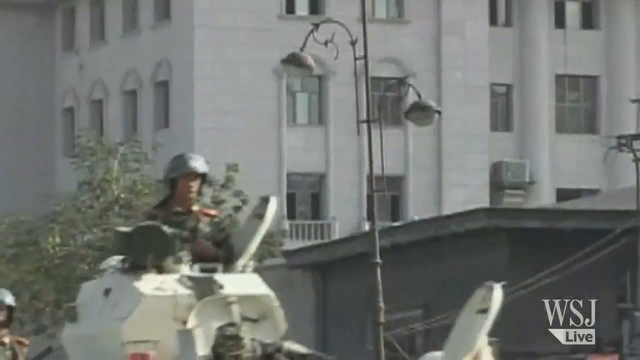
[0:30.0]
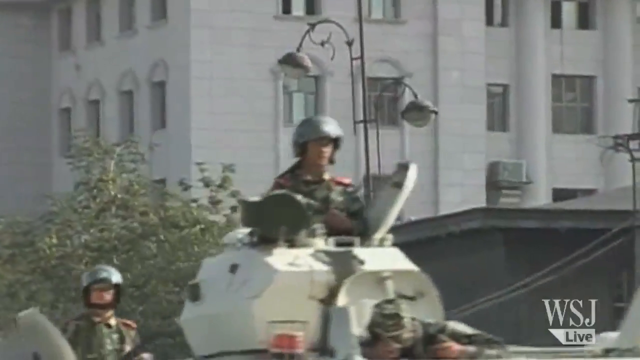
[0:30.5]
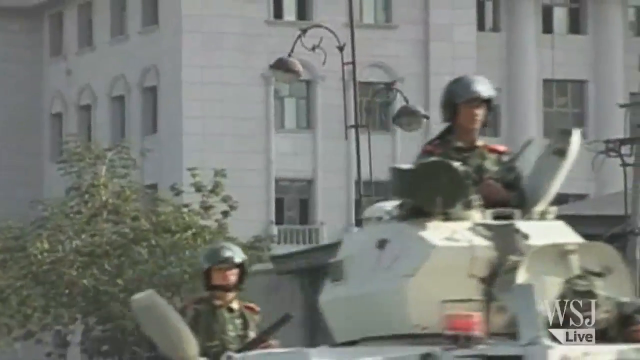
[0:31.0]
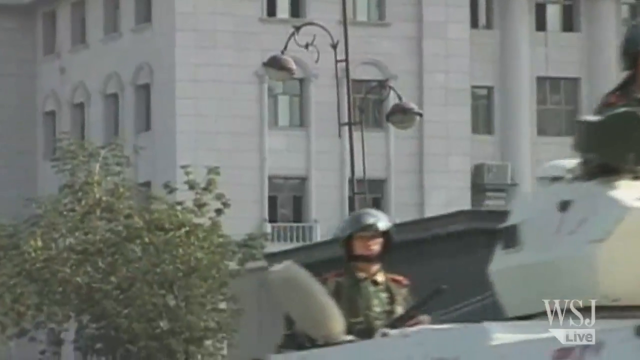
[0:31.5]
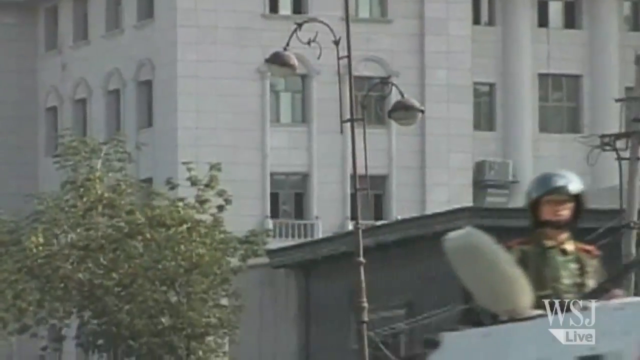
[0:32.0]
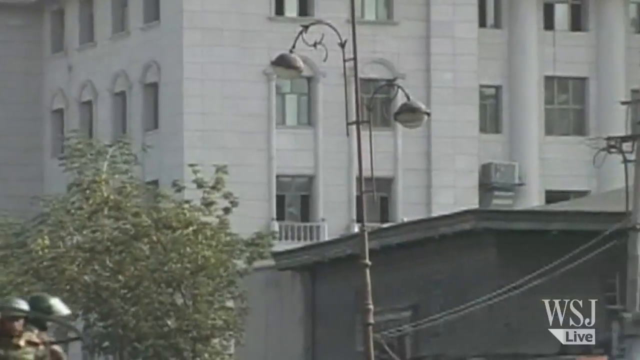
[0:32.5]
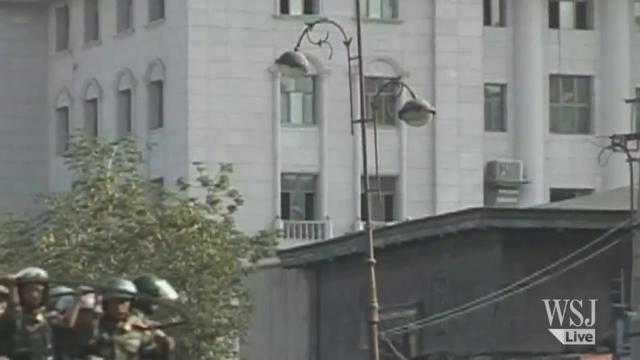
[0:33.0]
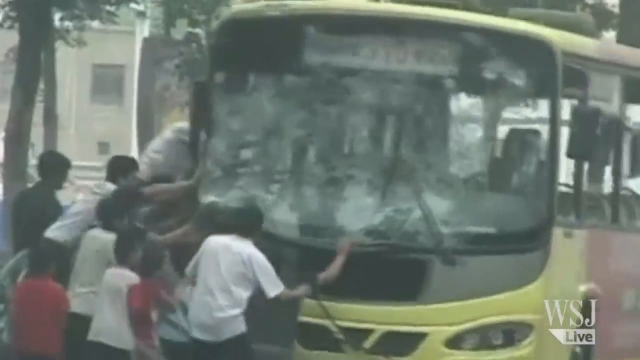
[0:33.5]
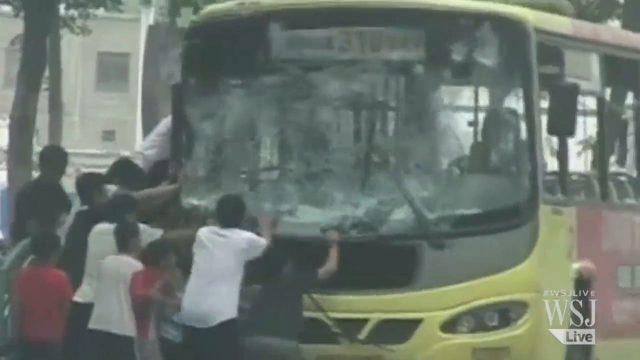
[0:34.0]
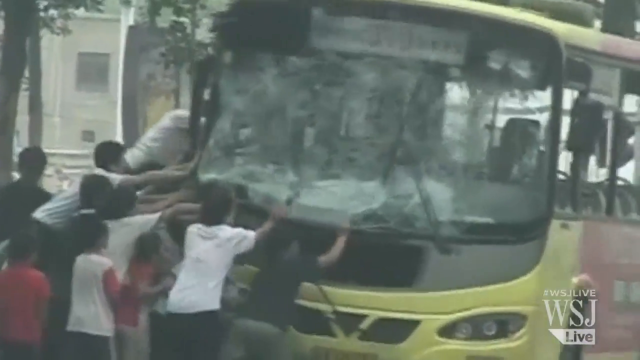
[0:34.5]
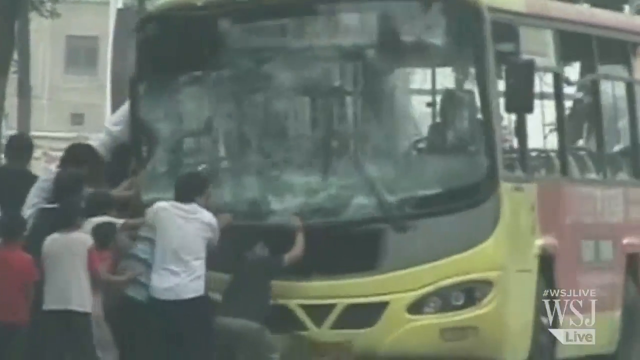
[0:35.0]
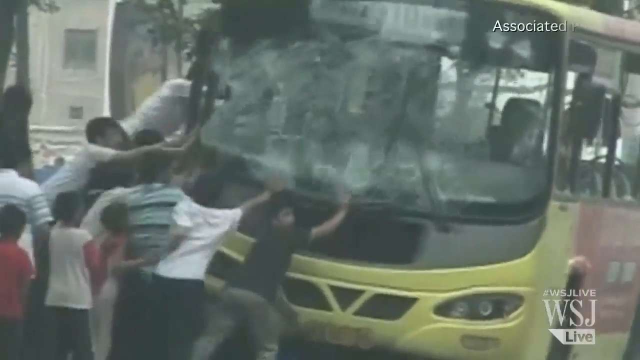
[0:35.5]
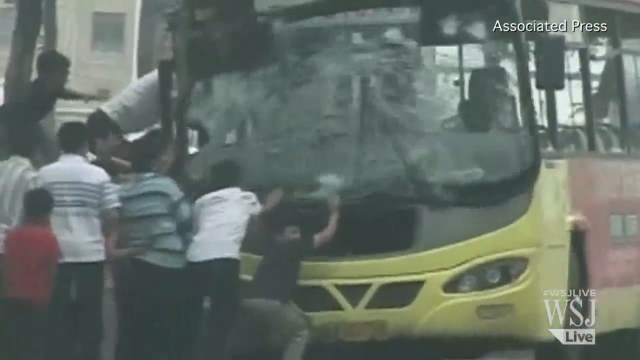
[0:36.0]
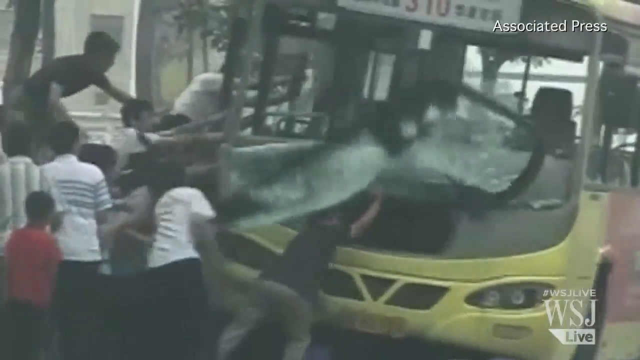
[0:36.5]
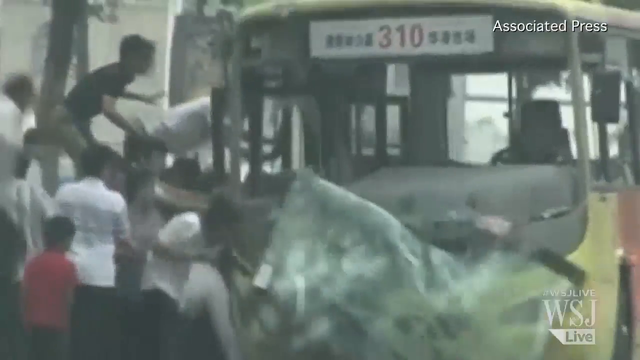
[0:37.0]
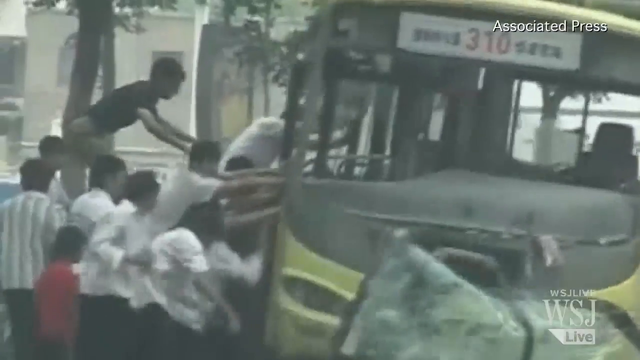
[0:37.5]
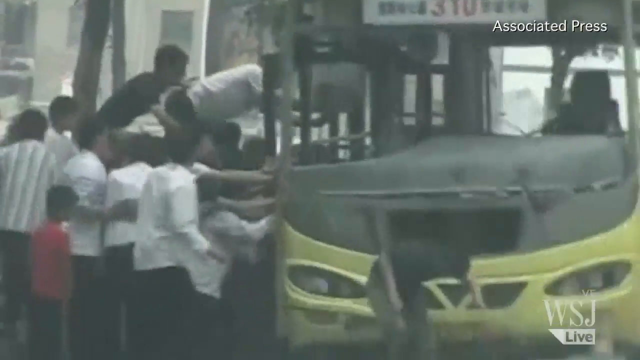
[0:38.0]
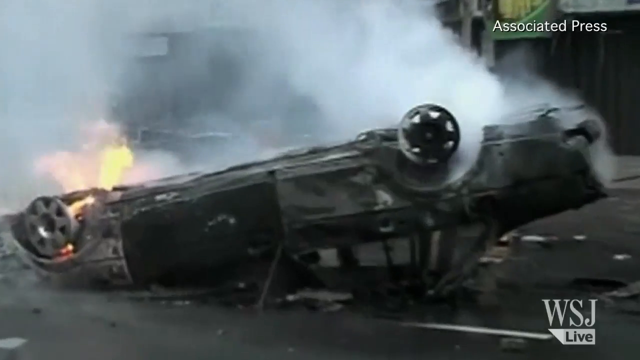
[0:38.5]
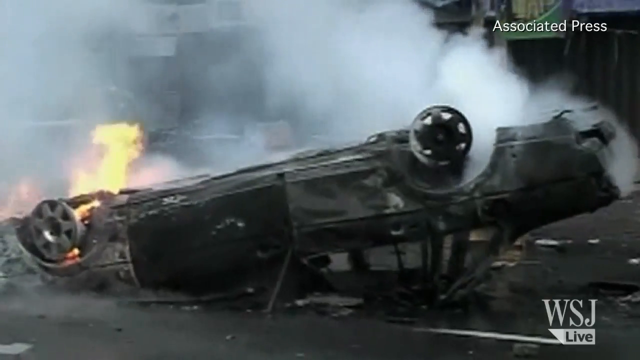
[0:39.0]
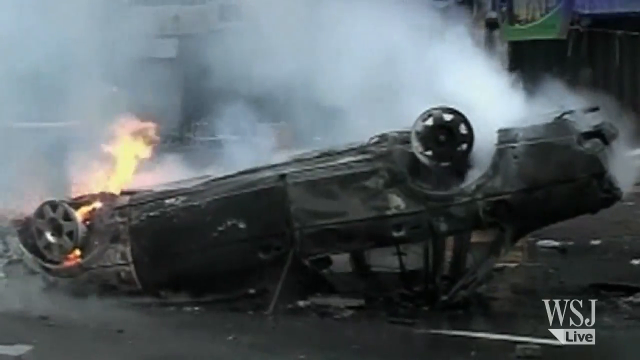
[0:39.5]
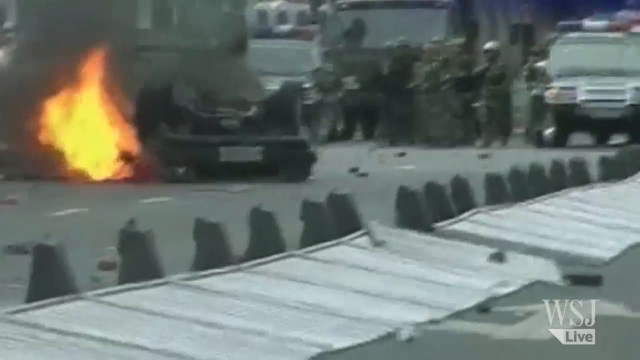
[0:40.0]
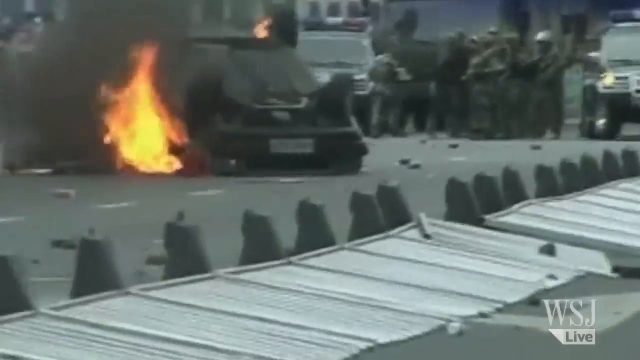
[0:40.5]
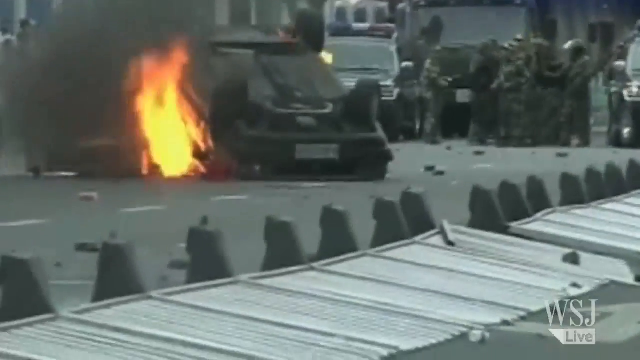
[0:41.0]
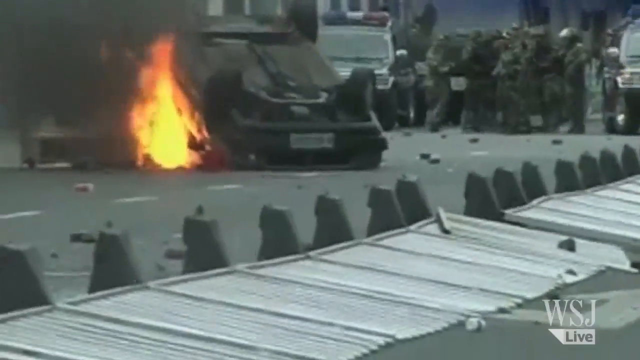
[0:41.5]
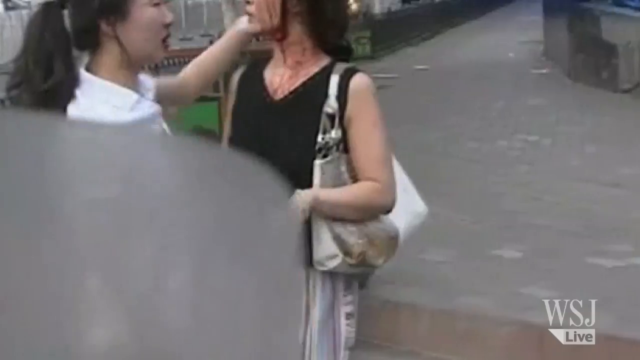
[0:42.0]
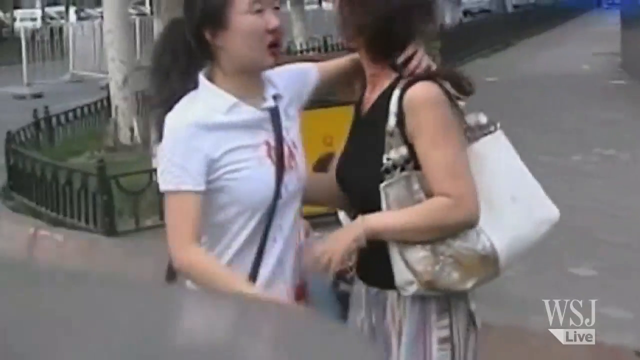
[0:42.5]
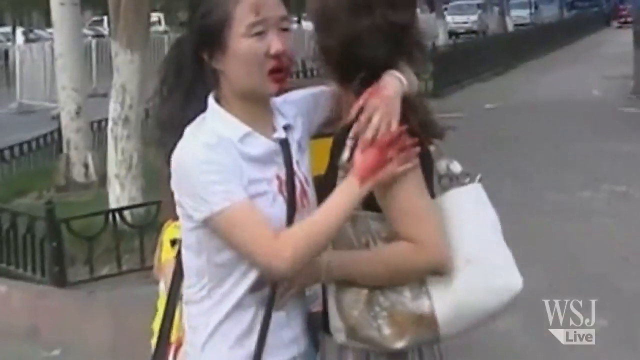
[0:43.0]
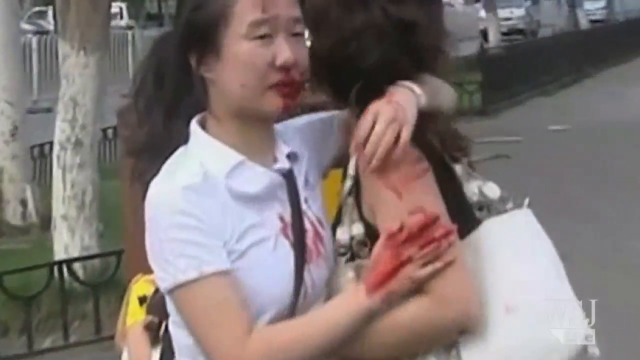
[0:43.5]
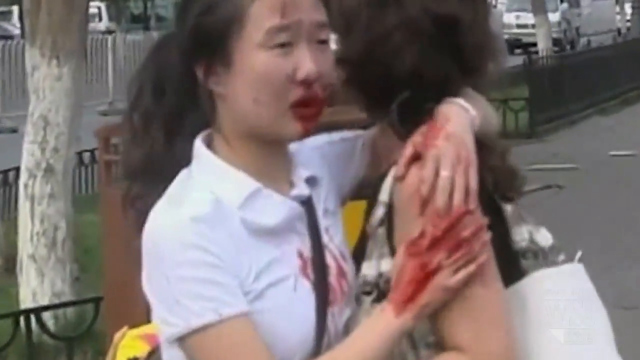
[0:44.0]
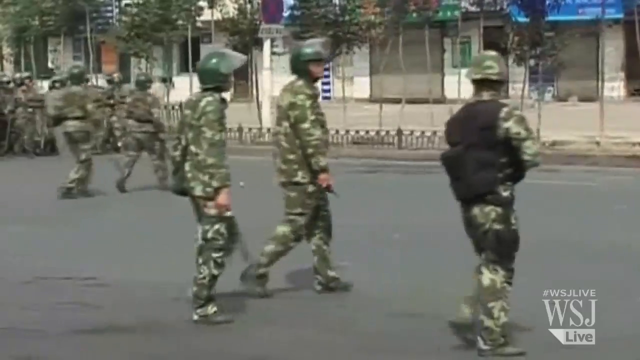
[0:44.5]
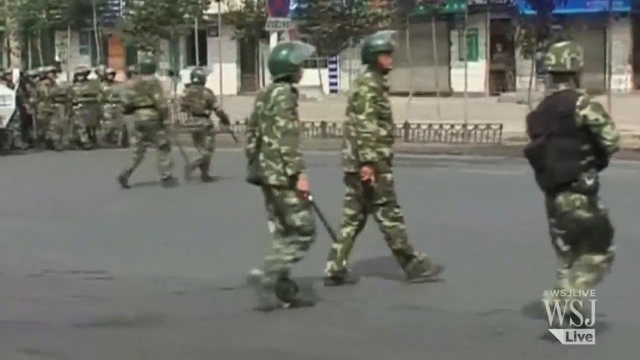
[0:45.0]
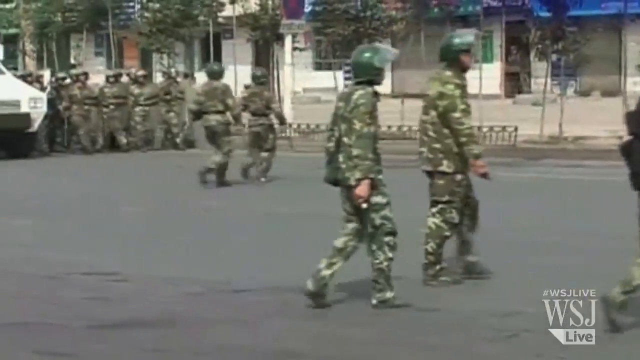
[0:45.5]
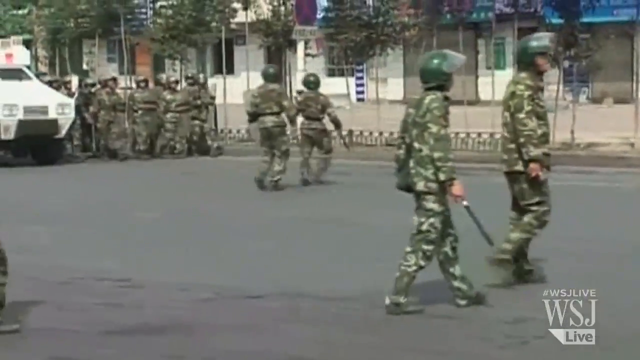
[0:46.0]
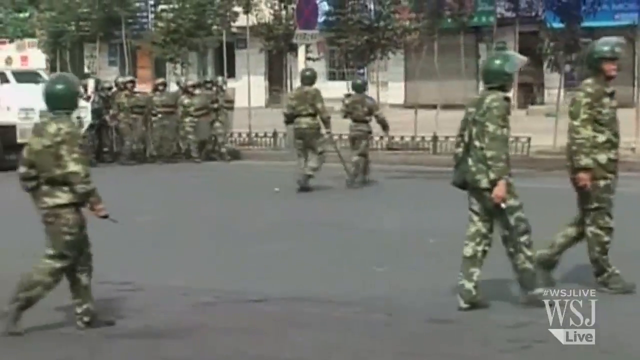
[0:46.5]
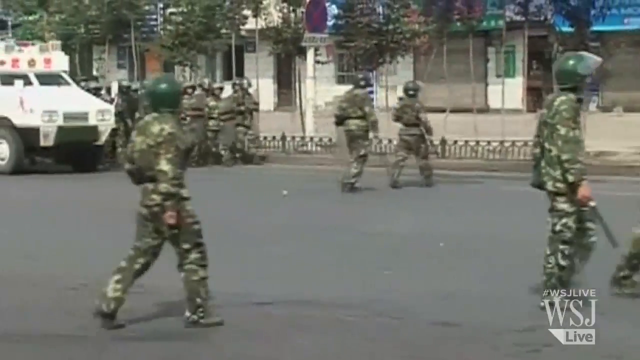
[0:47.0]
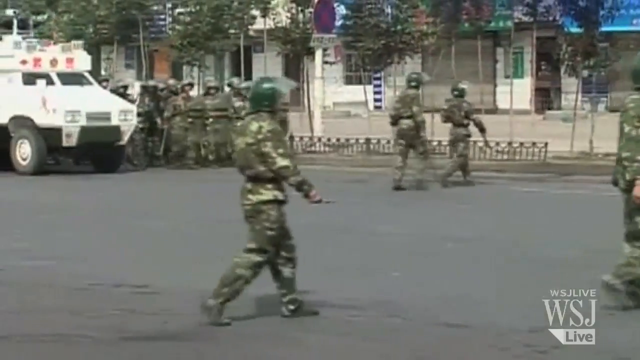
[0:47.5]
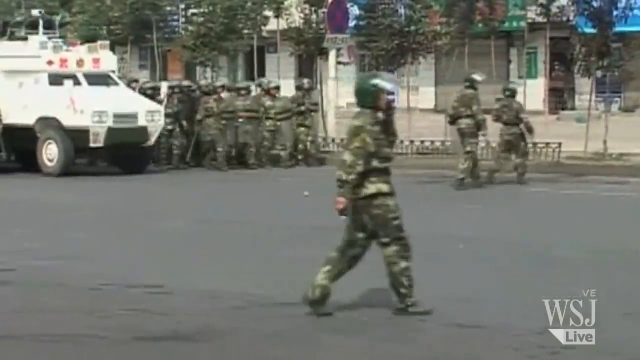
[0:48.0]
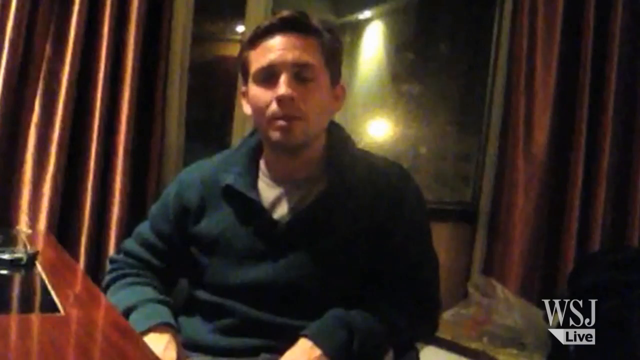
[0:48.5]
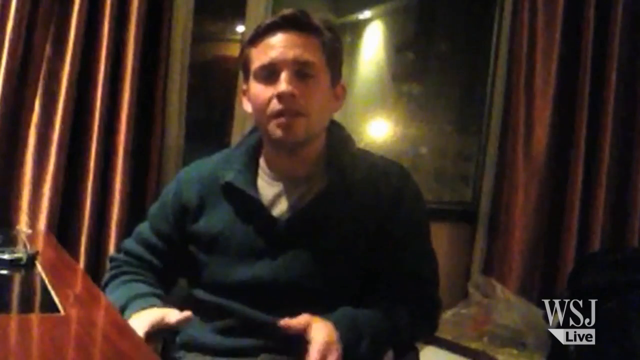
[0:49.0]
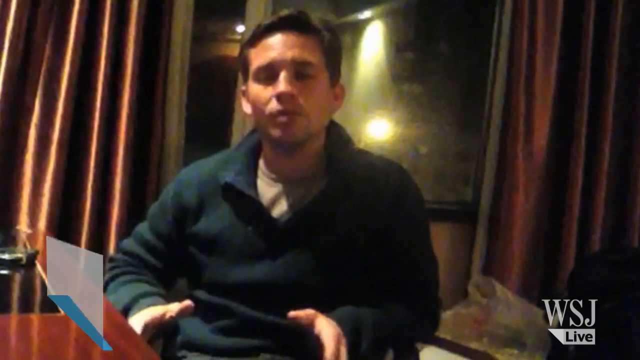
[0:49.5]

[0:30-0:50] A zoomed-in shot shows the soldiers in the tanks as they drive by. Other footage then shows an unruly group of people attacking a city bus that appears to be empty; they shake the bus, and the front windshield kind of cracks and falls onto someone at the front. It cuts to footage of what looks like an overturned car that looks completely charred, as if it has been on fire for some time. More footage shows what looks like another car on fire, with the car on the left side and a crowd of people on the right side. Next, a woman hugs another woman; the woman on the left has blood coming out of her nose and over her mouth, and blood on both her right and left hands. She is kind of putting her left arm over the other woman and her right hand over the other woman's arm, where blood is visible. A group of soldiers then walks in the street from the left side of the screen to the right and out of frame.